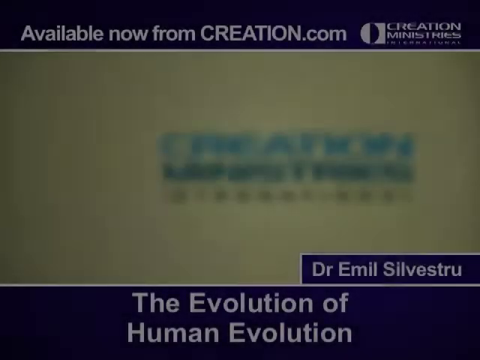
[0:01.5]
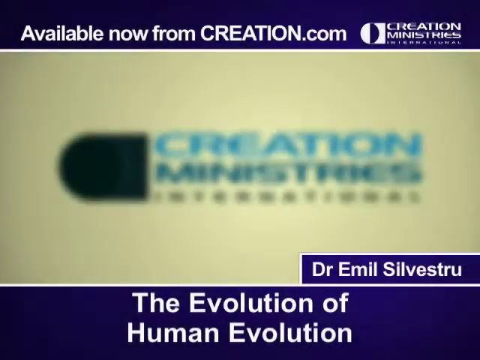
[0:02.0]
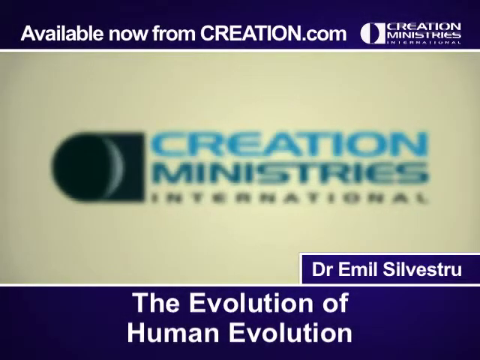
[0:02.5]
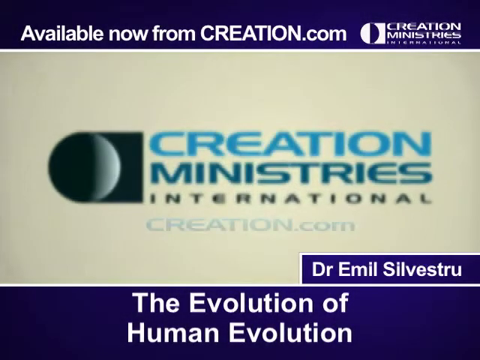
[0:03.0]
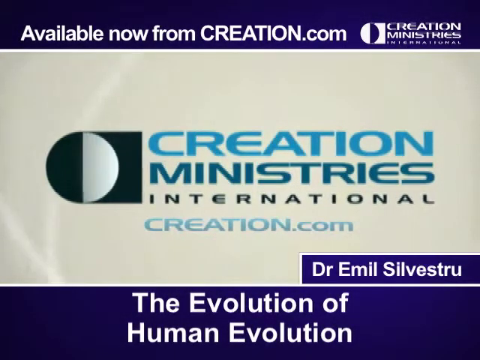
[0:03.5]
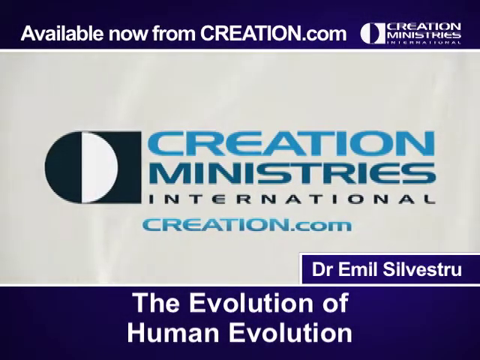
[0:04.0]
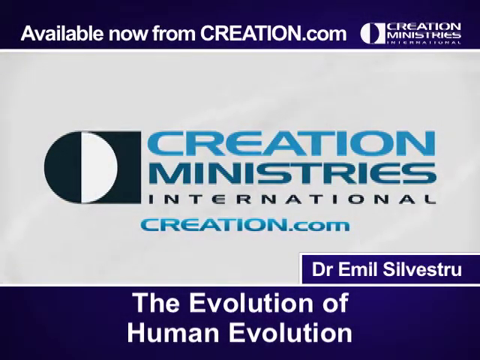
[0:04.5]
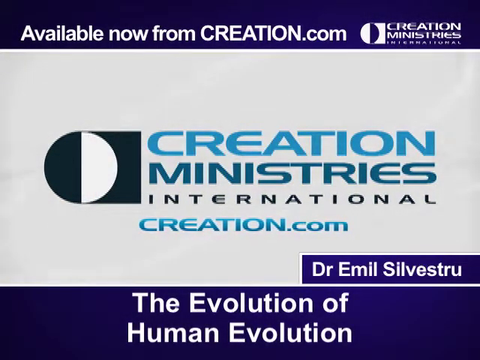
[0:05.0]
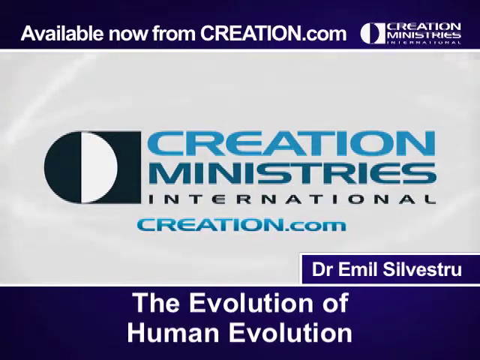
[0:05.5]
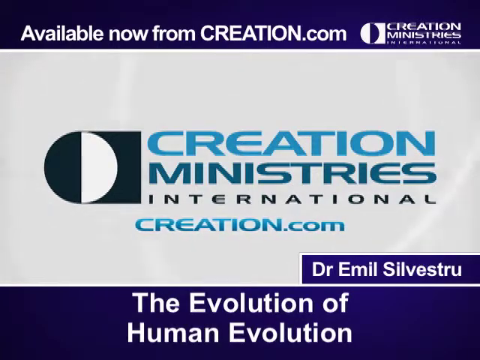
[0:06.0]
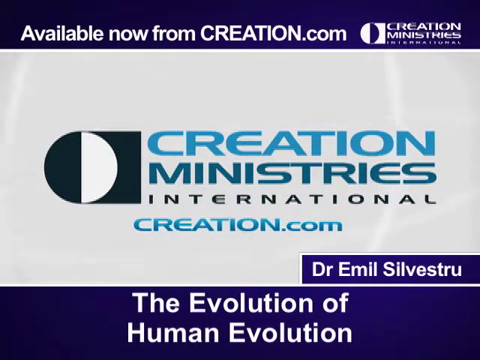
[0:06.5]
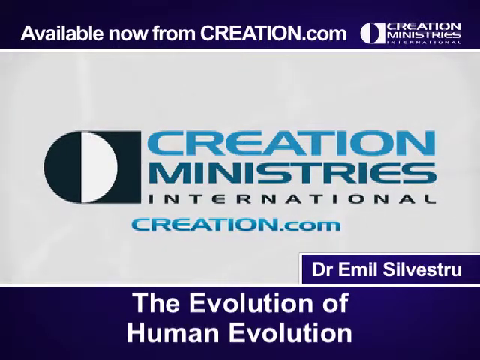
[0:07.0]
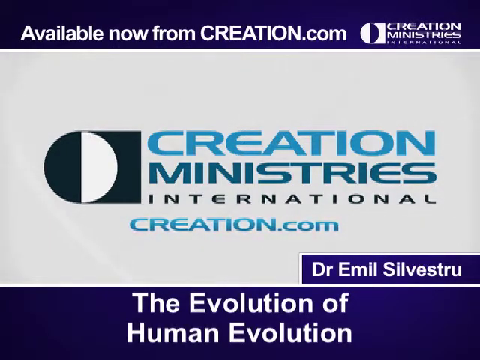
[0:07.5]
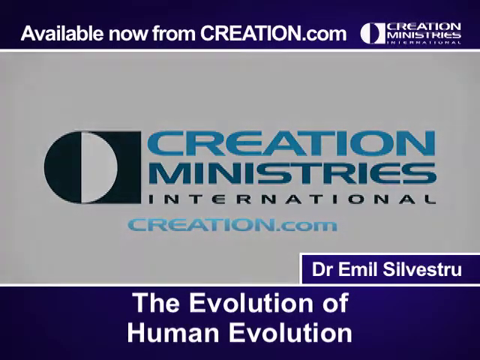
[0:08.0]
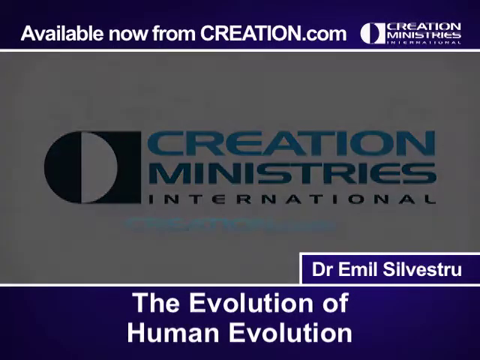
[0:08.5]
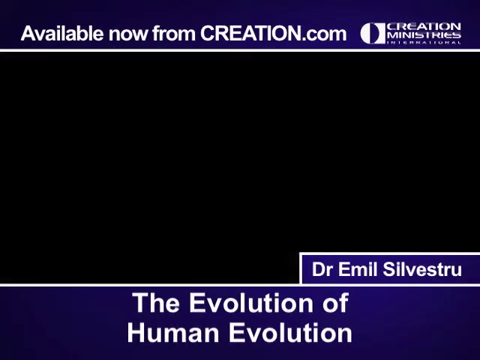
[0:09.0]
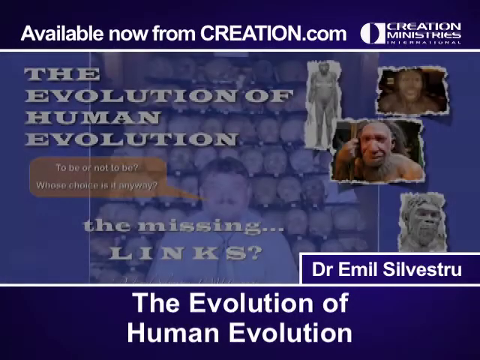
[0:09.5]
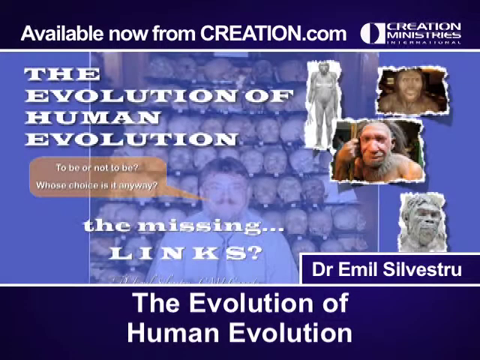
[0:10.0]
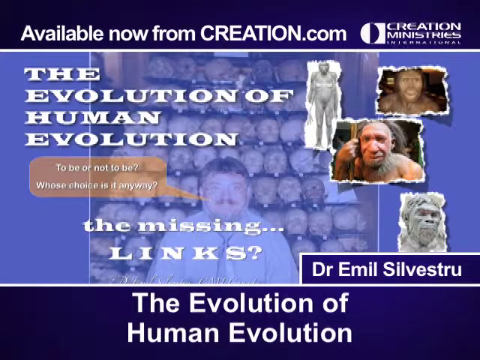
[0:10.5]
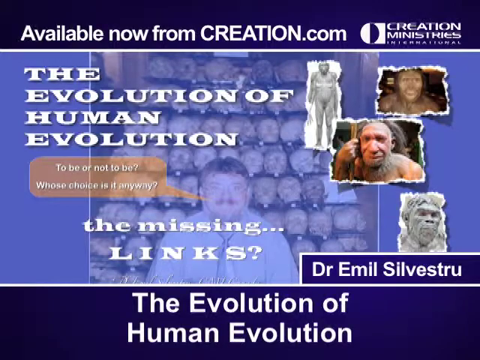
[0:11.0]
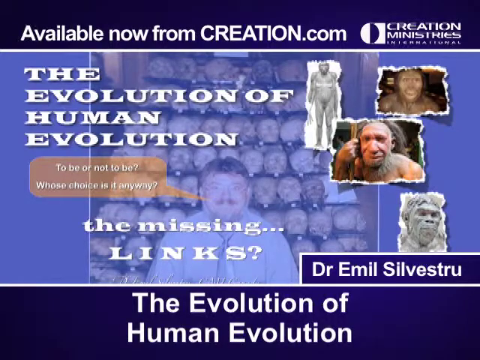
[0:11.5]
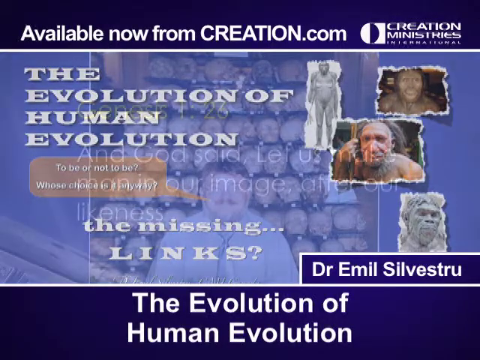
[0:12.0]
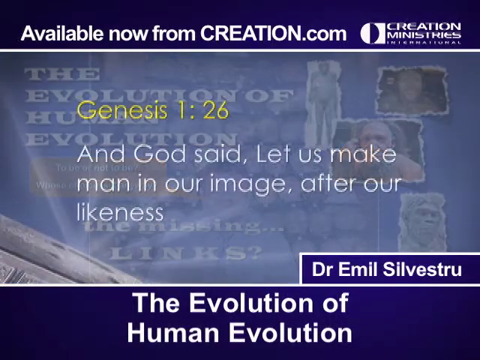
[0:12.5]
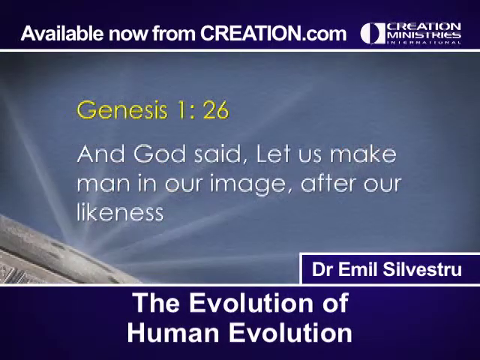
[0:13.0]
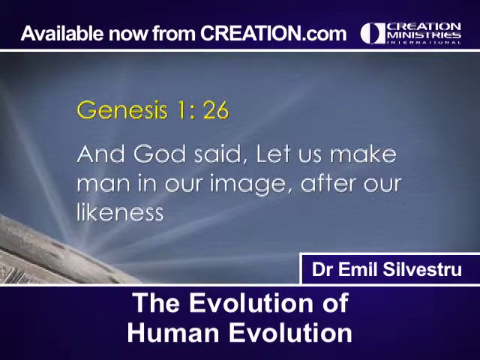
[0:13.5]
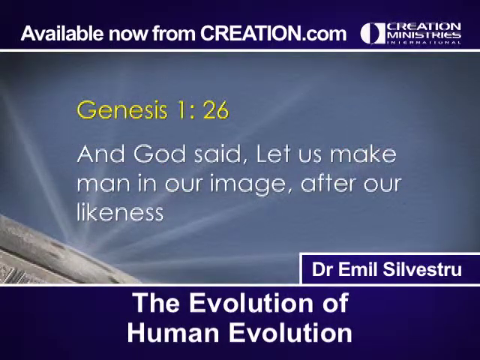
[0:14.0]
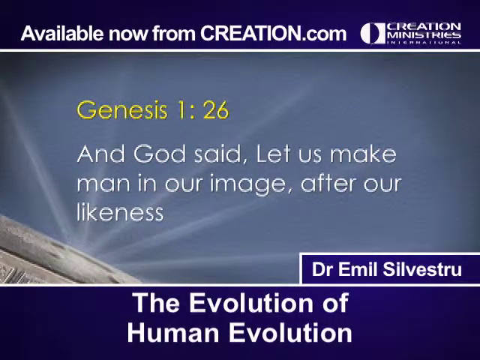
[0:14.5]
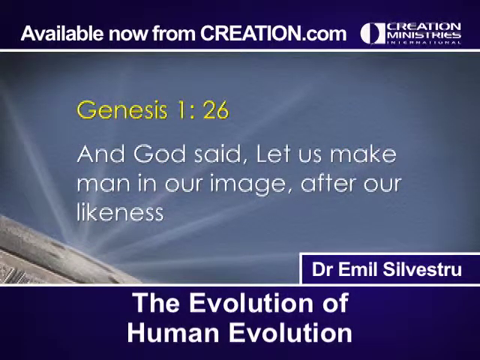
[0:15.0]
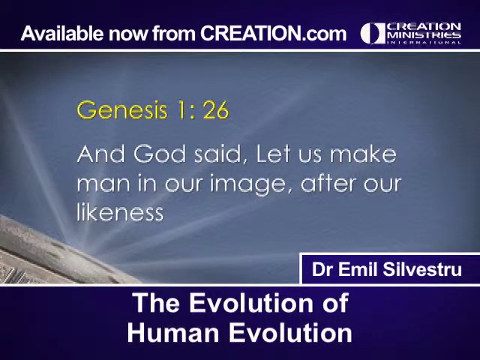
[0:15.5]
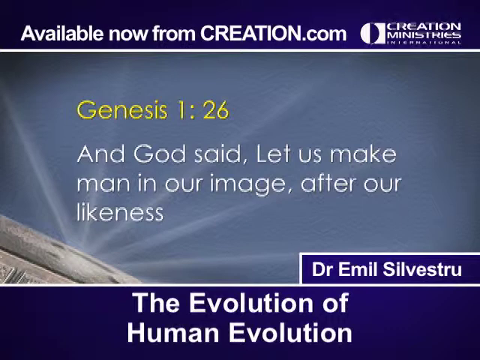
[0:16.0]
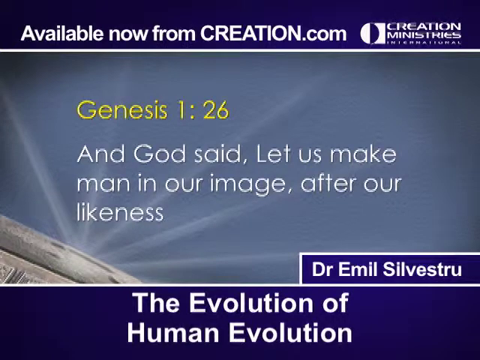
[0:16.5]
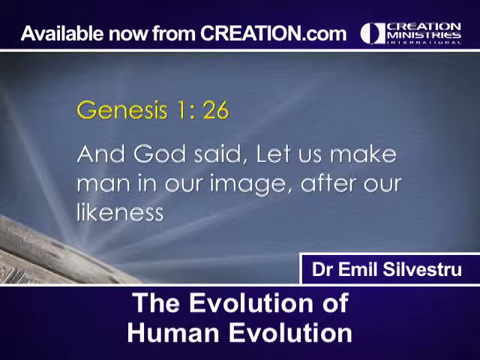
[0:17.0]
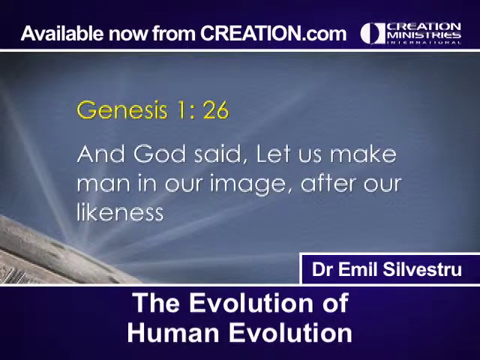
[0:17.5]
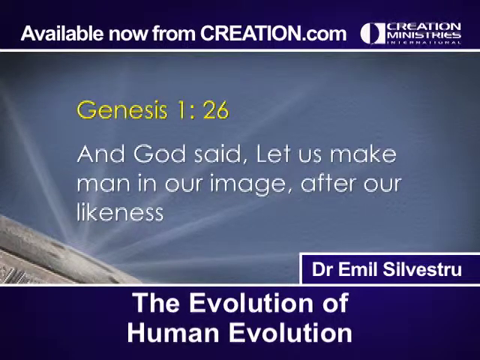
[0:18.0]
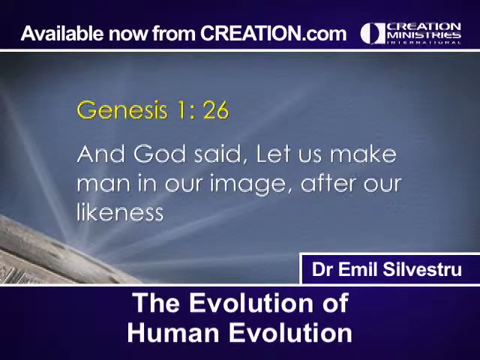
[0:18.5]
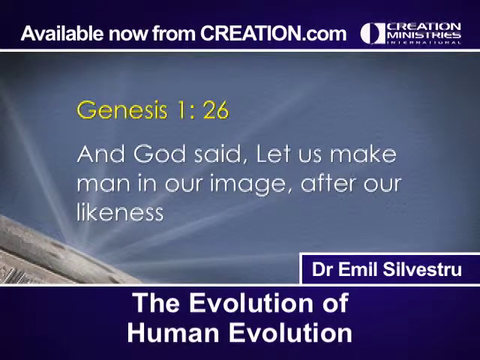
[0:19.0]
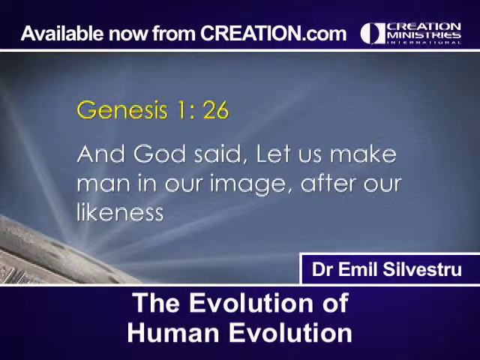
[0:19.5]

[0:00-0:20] The video opens with a screen of text. At the top it reads "available now from creation.com" alongside a logo and the words "creation ministries", and at the bottom it reads "the evolution of human evolution" and "Dr. Emil Silvestru". In the middle a video plays in which what looks like the Creation Ministries International logo comes into focus, with "creation.com" beneath it. The logo fades out, and a screen appears reading "the evolution of human evolution, to be or not to be. Whose choice is it anyway?" along with "the missing links?" A man with a mustache and glasses, wearing a shirt and tie, stands in front of what looks like a bunch of skulls. Off to his right, photographs or illustrations of what look like Neanderthal men are superimposed.